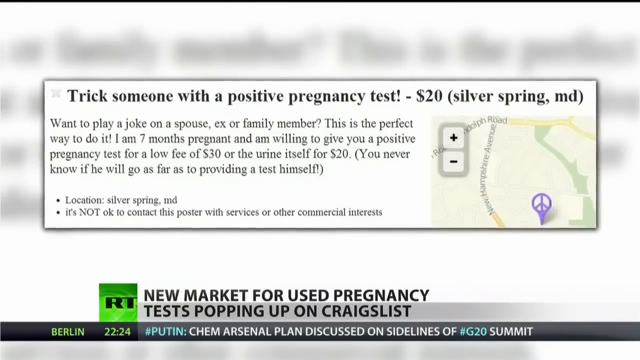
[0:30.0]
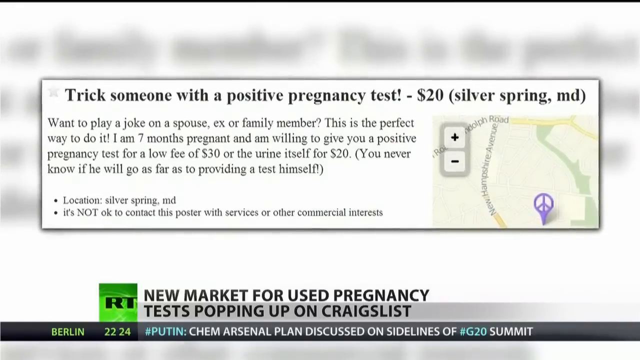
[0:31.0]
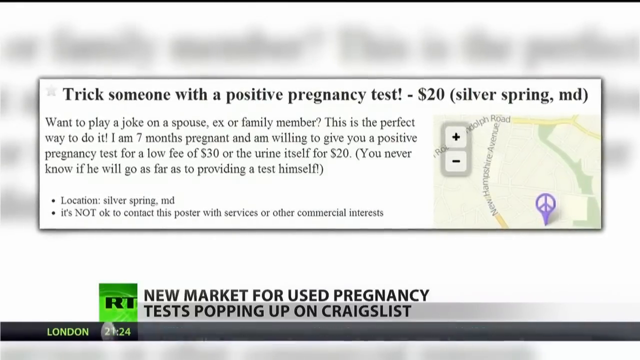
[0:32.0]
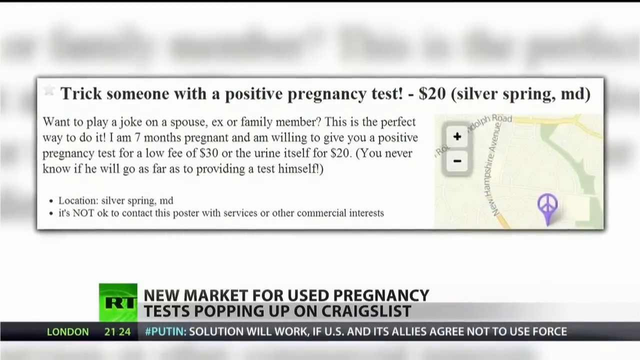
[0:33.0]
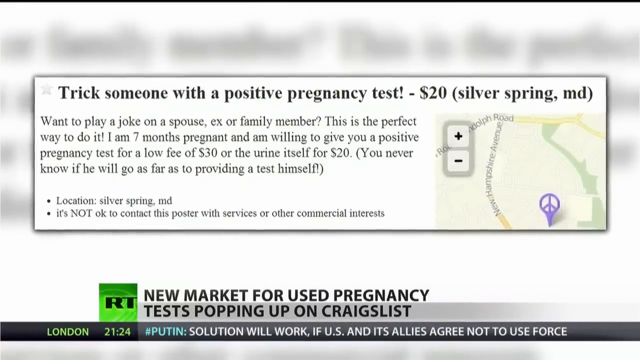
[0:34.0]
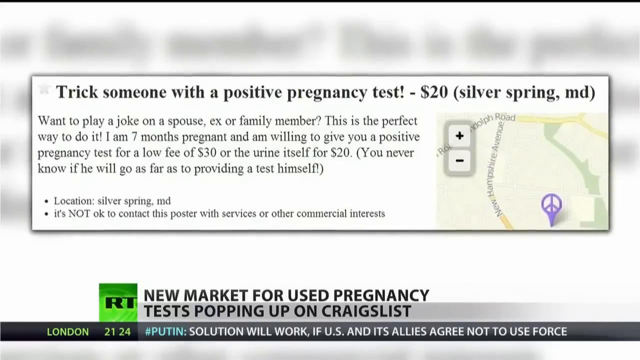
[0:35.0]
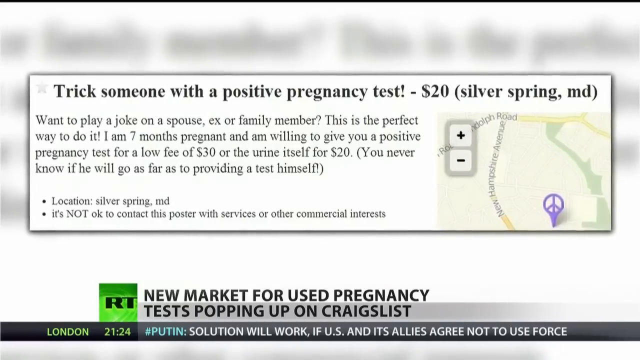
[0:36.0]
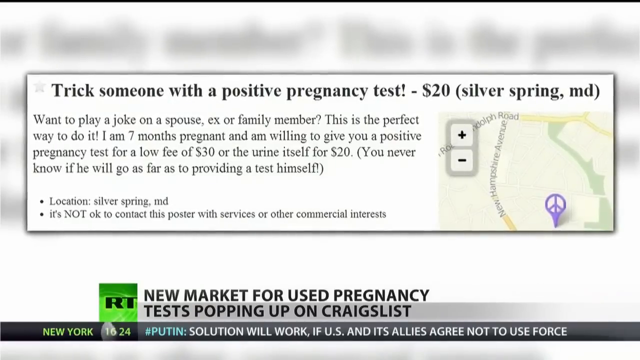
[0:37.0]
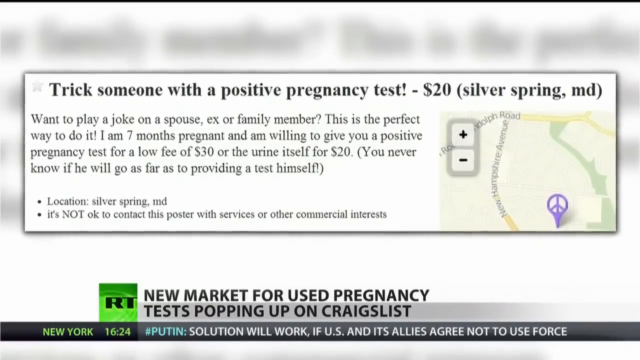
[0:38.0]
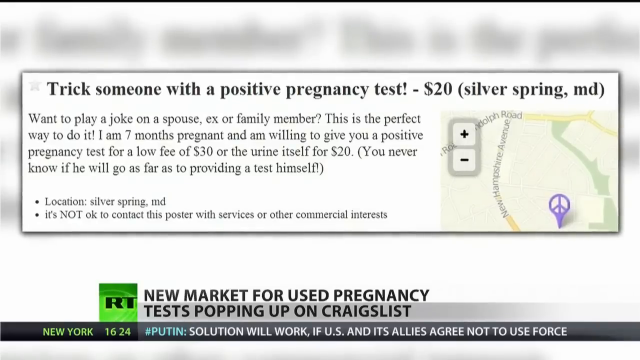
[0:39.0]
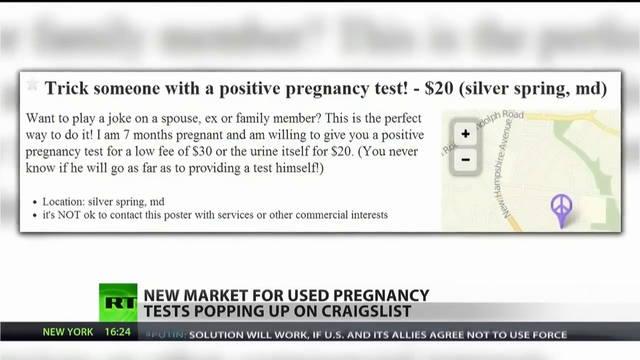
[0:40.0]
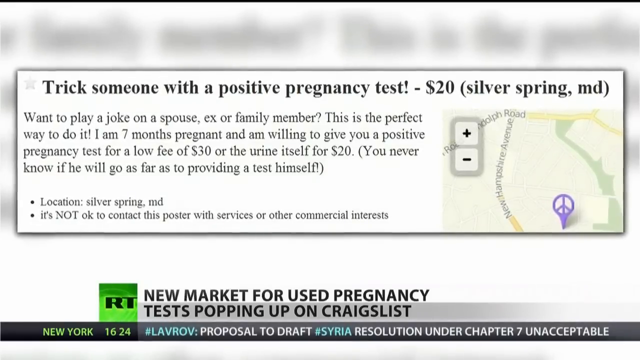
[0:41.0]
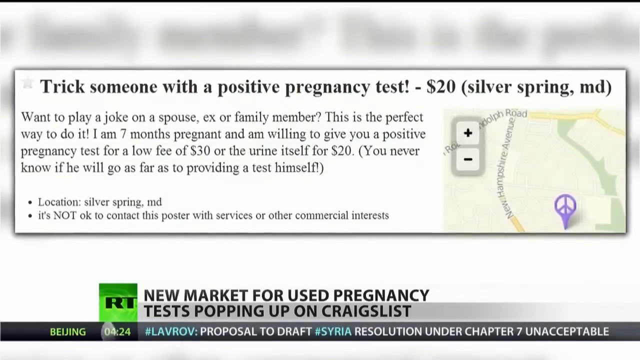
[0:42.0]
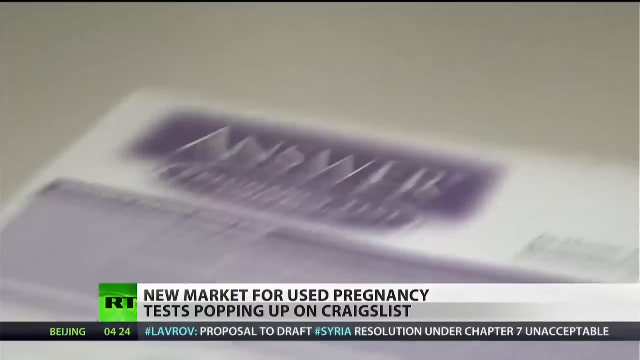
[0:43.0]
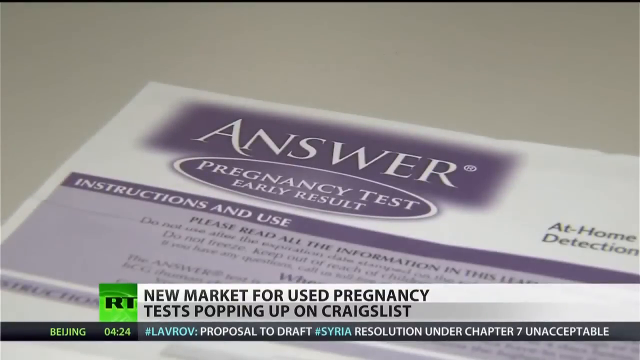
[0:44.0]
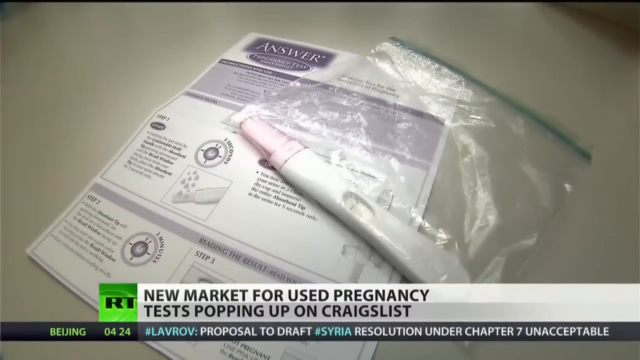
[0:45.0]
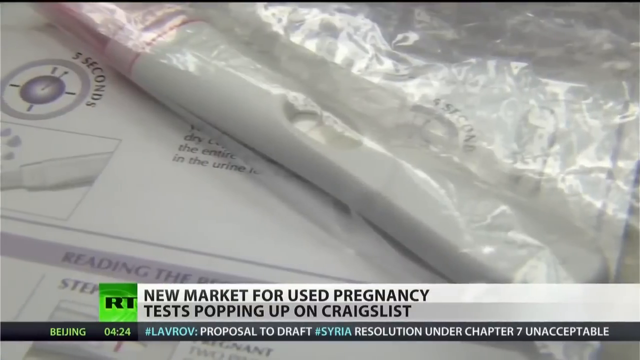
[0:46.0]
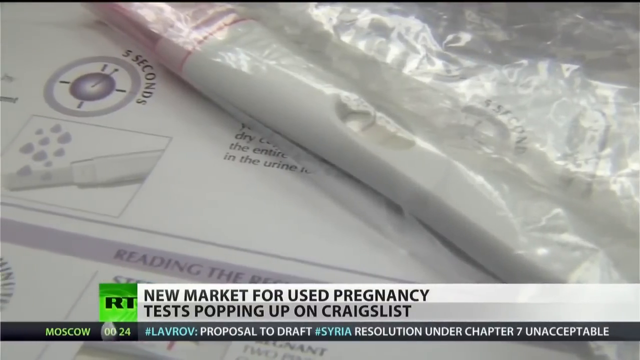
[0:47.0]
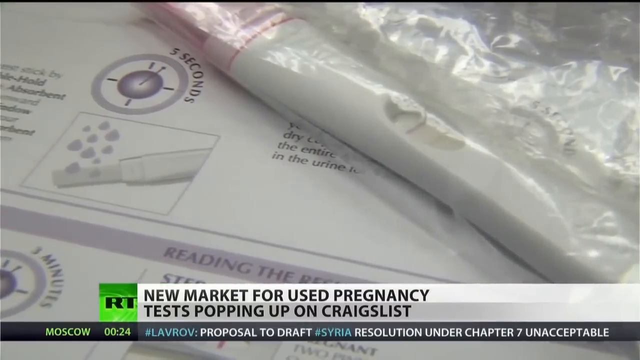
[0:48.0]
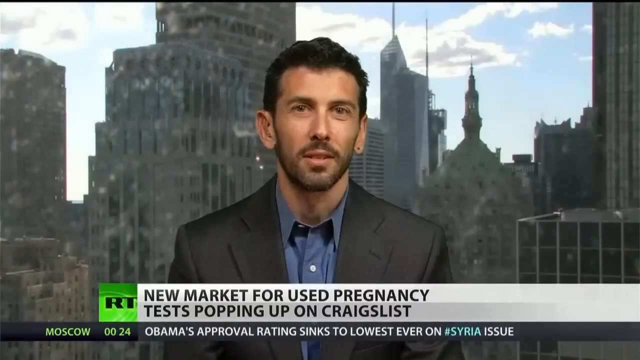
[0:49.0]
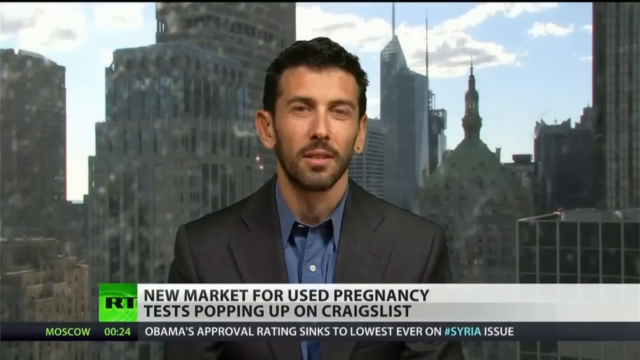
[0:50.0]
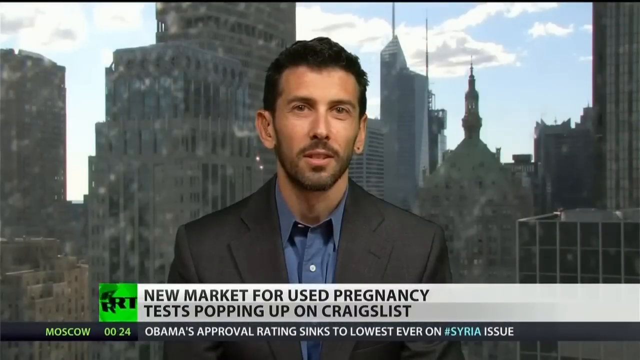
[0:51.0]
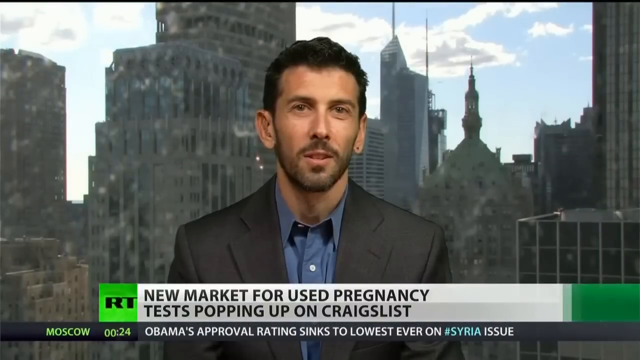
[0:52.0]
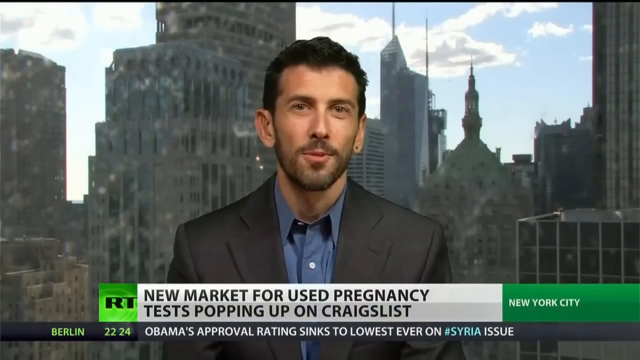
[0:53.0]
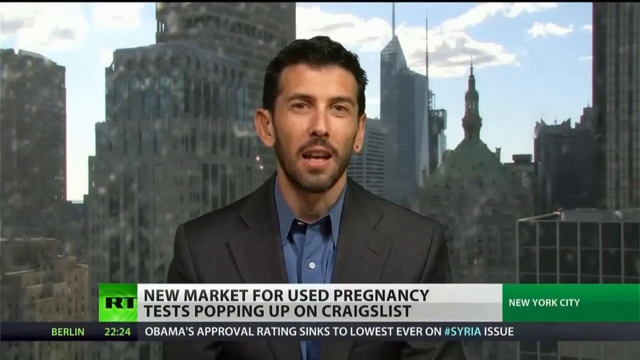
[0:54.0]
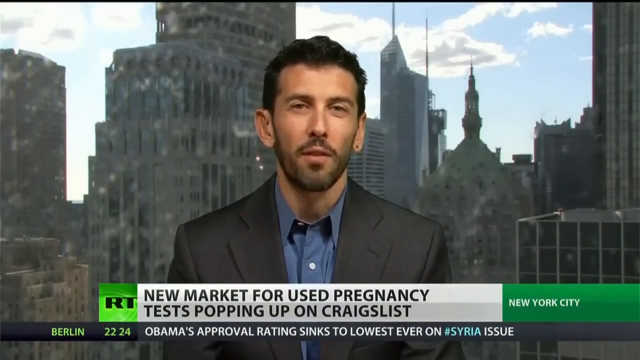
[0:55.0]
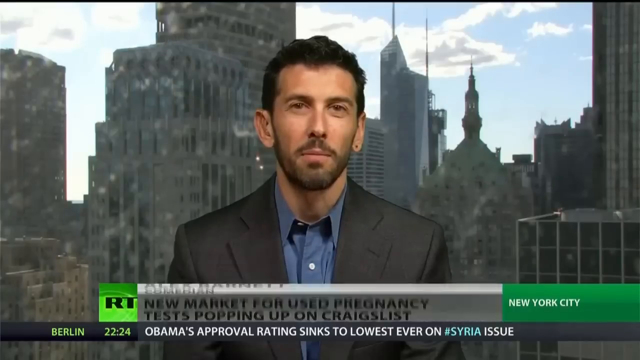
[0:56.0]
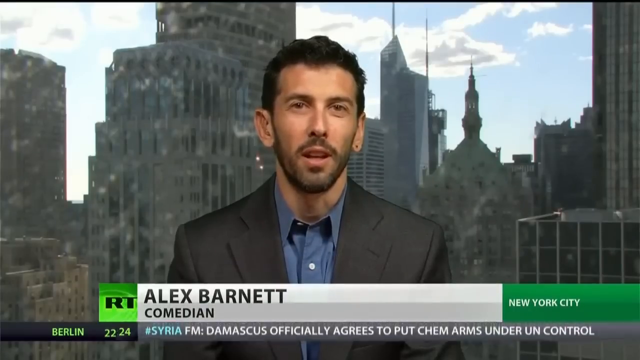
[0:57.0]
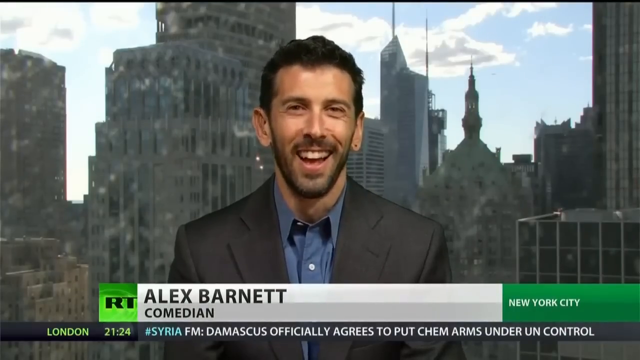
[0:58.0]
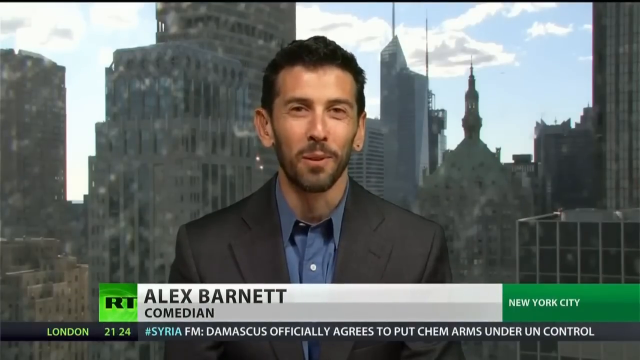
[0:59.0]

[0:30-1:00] A Craigslist listing fills the center of the screen, titled "Trick someone with a positive pregnancy test, $20, Silver Spring, MD." Its text reads "any joke on a spouse, ex, or family member, this is the perfect way to do it. I am seven months pregnant, and I am willing to give you a positive pregnancy test for a low fee of $30," followed by "You never know if he will go as far as to provide a test himself," "Location: Silver Spring, Maryland," and "It's not okay to contact this poster with services or other commercial interests." At the bottom of the page it says "new market for used pregnancy tests popping up," and the ticker beneath begins with "Putin" and mentions a plan "discussed on sidelines of G20 summit." The video then transitions to a screen showing pregnancy tests in their retail packaging. A man in a news studio, wearing a dark-colored suit jacket and a dark blue shirt, then talks on screen and seems to be laughing slightly as he speaks about the story.